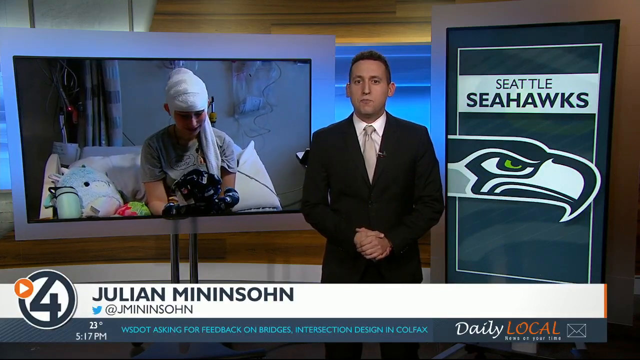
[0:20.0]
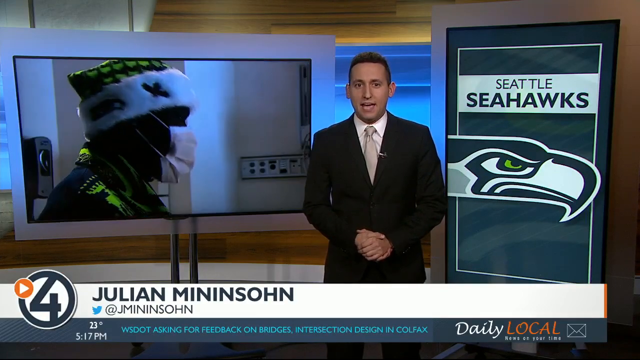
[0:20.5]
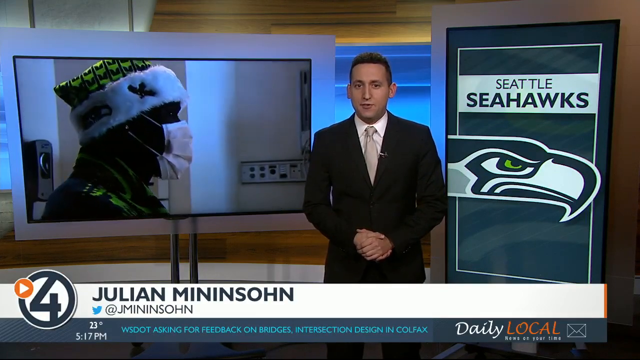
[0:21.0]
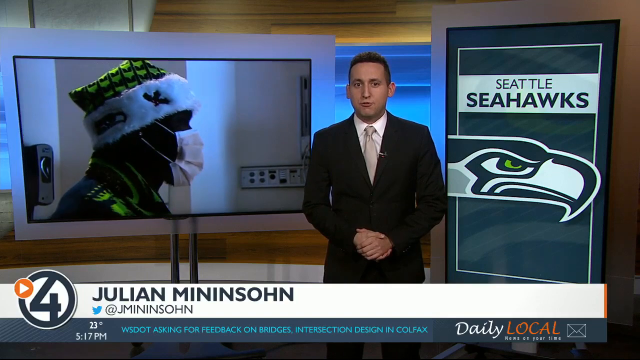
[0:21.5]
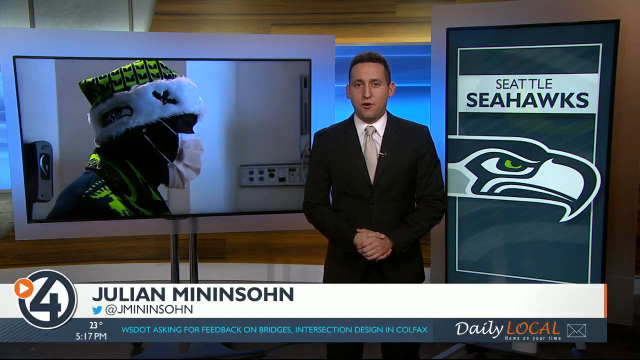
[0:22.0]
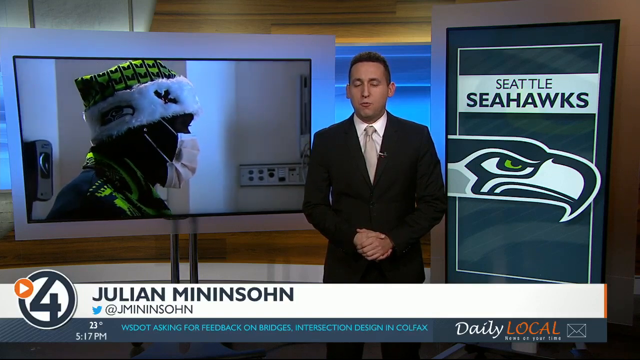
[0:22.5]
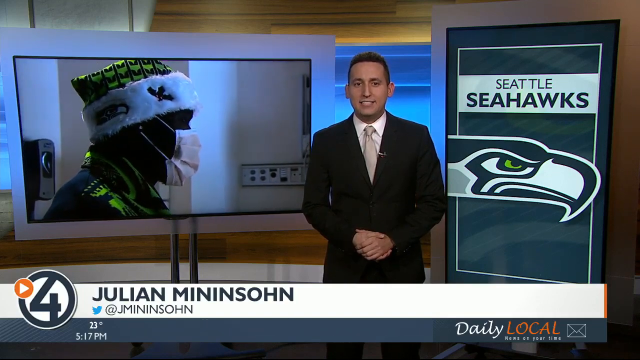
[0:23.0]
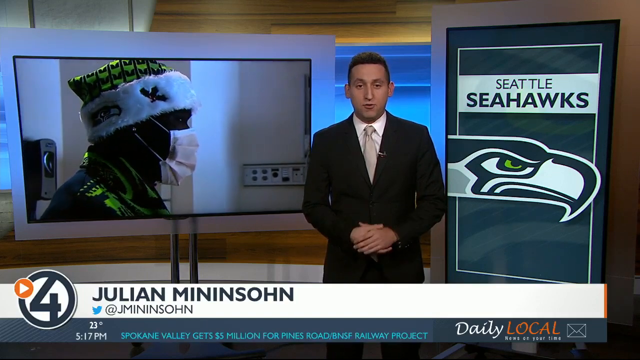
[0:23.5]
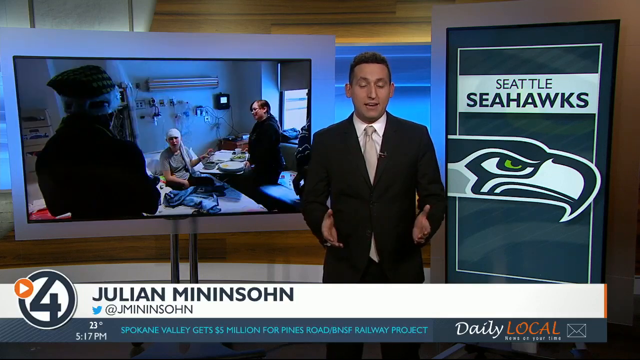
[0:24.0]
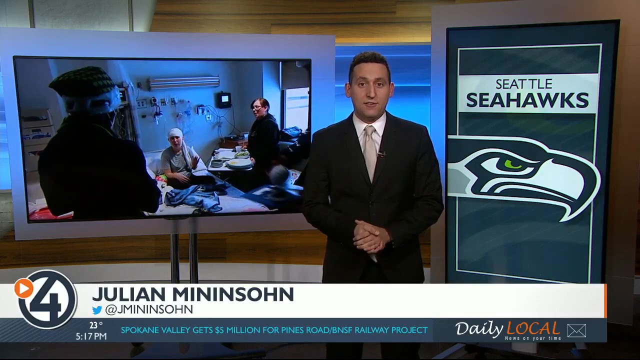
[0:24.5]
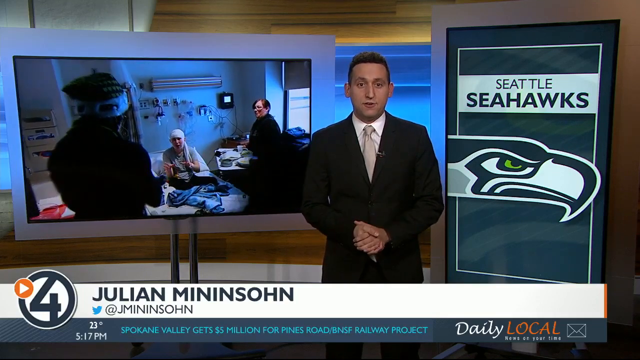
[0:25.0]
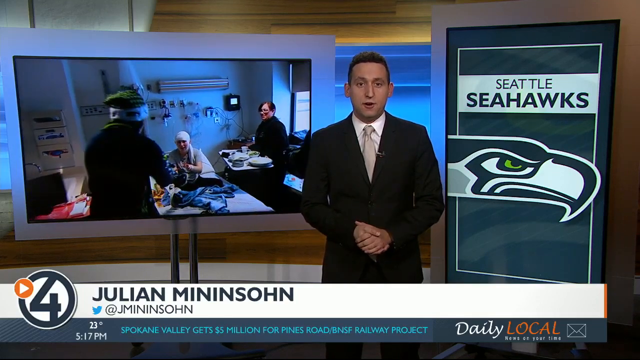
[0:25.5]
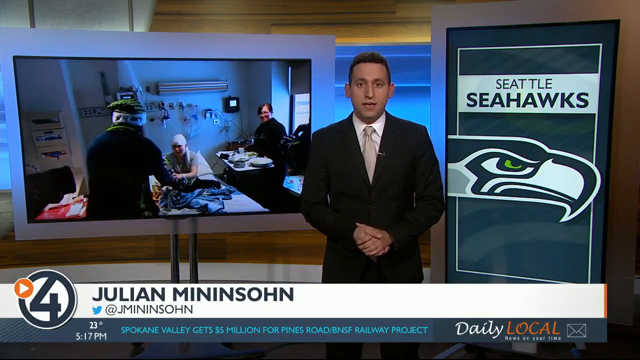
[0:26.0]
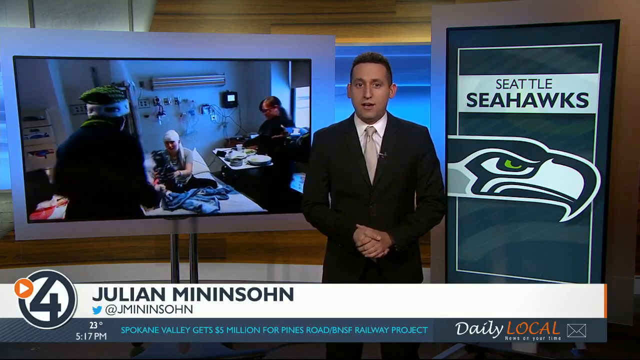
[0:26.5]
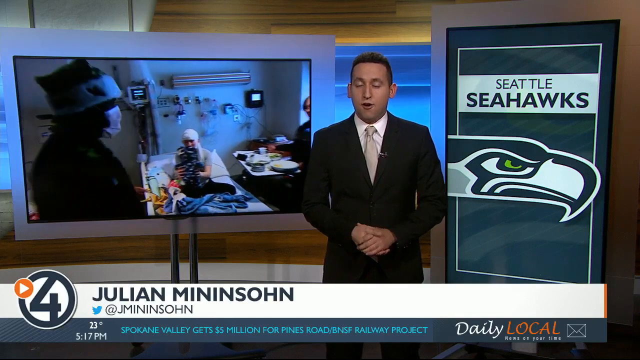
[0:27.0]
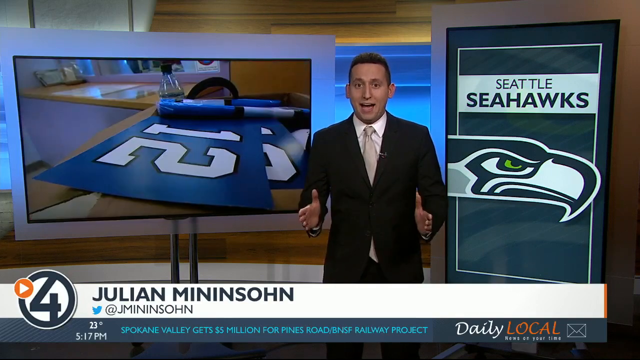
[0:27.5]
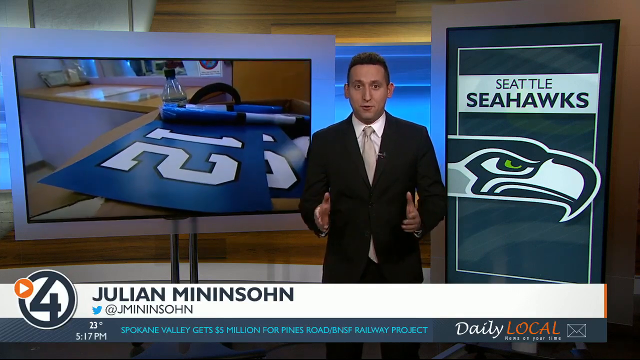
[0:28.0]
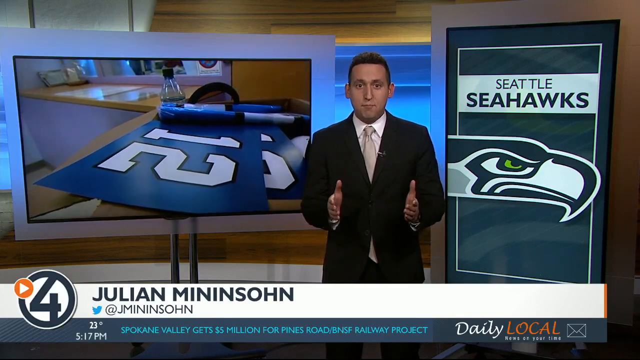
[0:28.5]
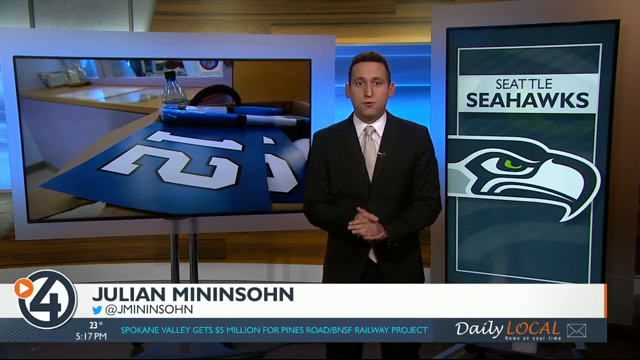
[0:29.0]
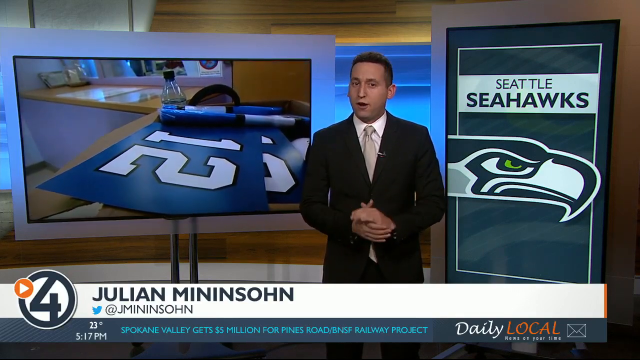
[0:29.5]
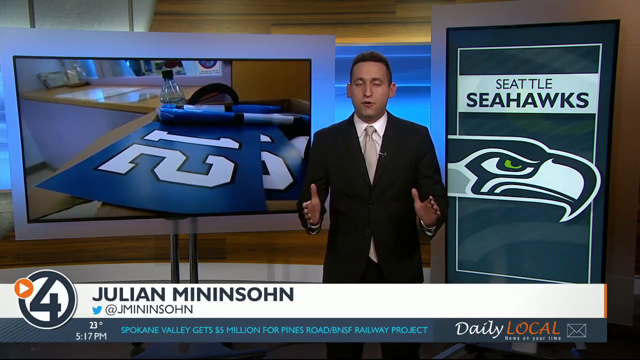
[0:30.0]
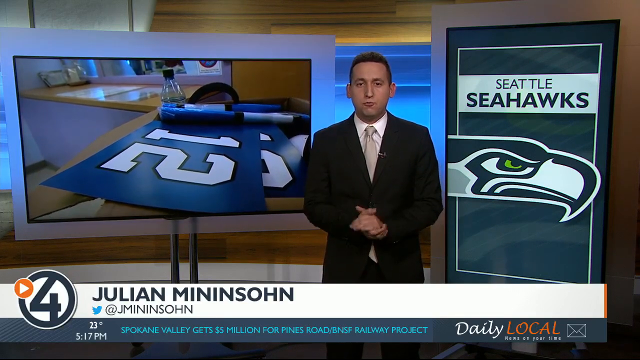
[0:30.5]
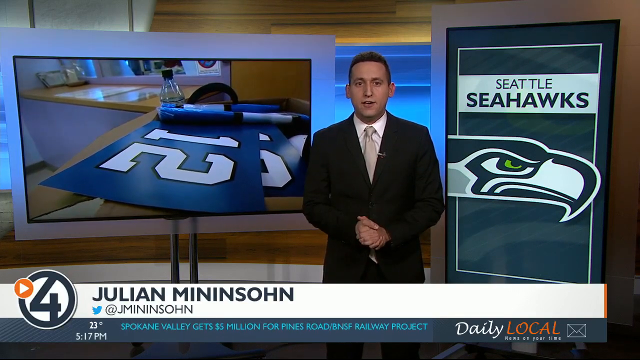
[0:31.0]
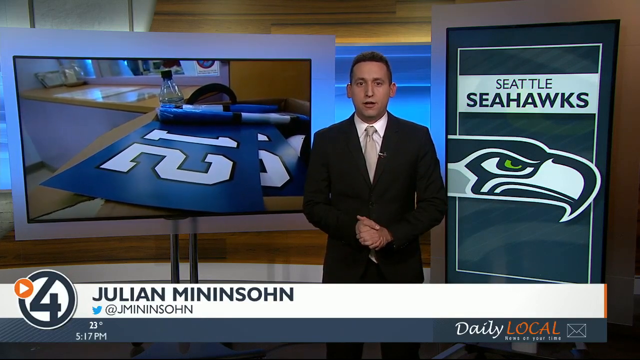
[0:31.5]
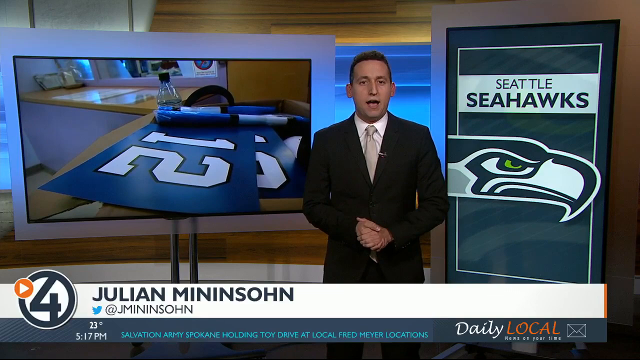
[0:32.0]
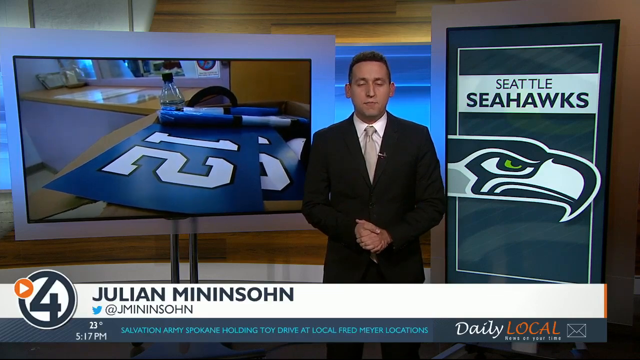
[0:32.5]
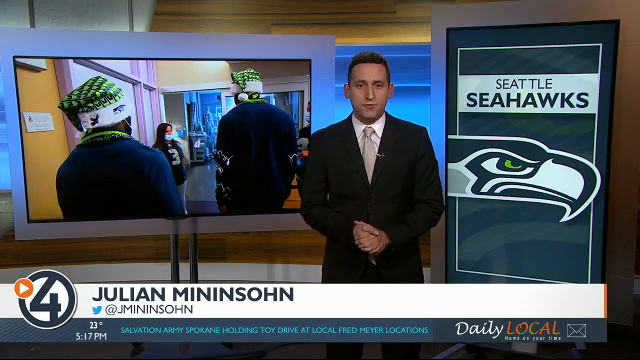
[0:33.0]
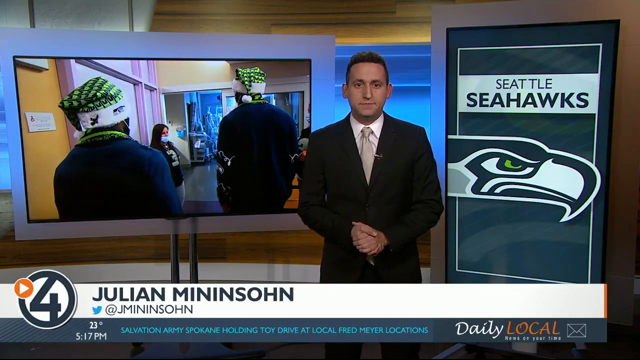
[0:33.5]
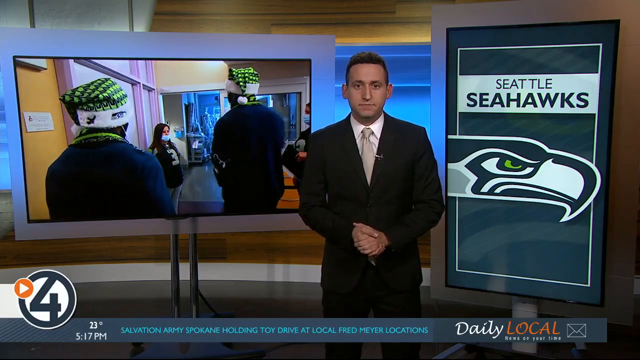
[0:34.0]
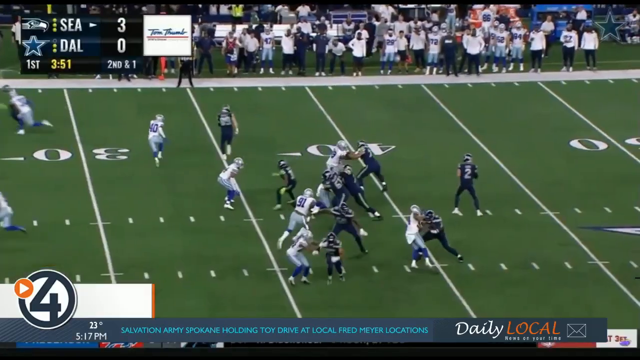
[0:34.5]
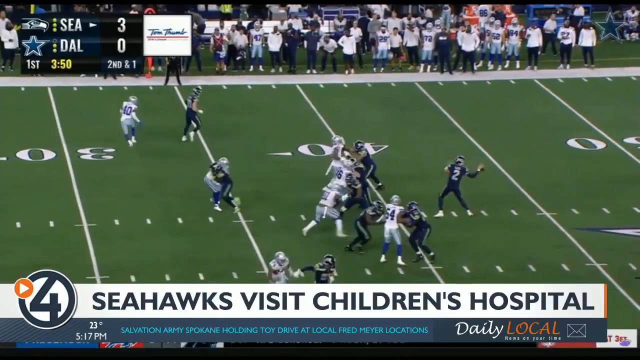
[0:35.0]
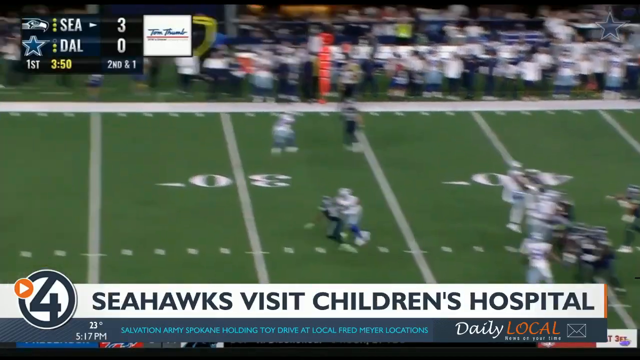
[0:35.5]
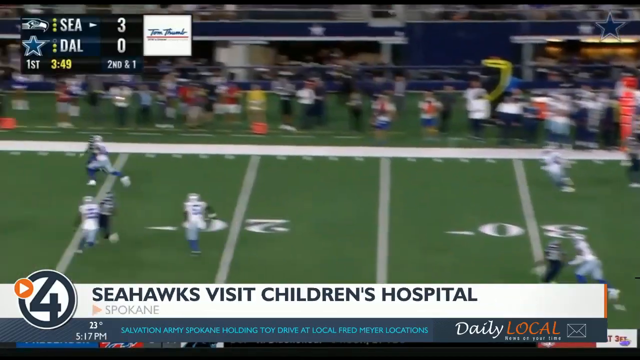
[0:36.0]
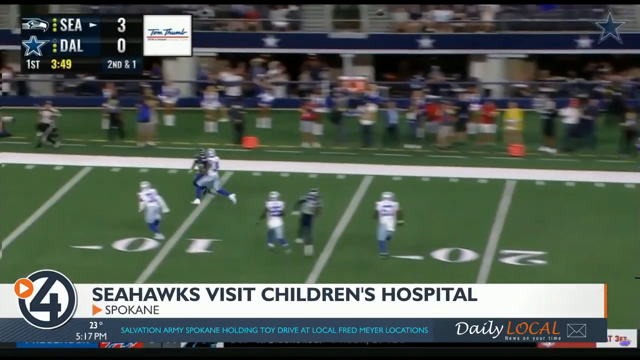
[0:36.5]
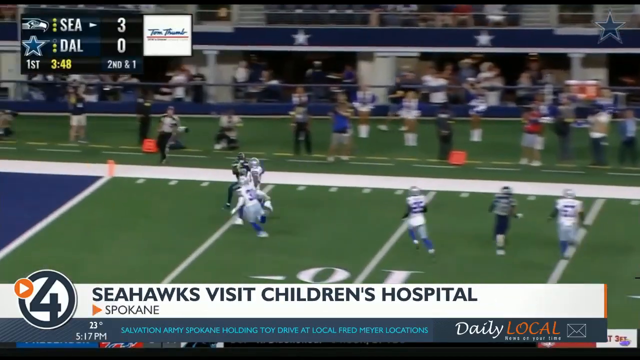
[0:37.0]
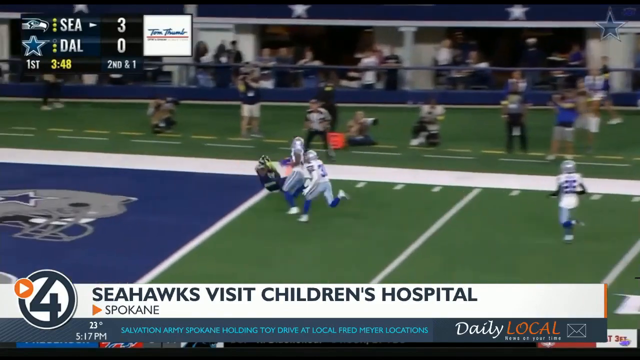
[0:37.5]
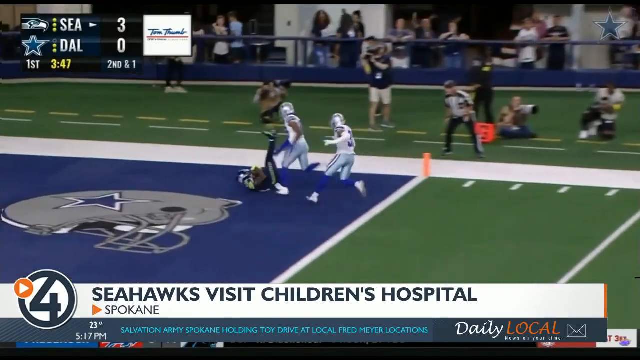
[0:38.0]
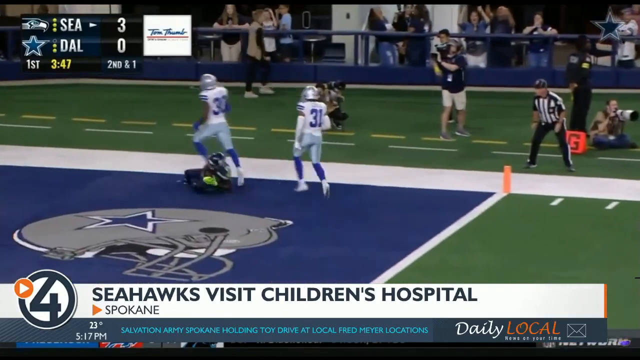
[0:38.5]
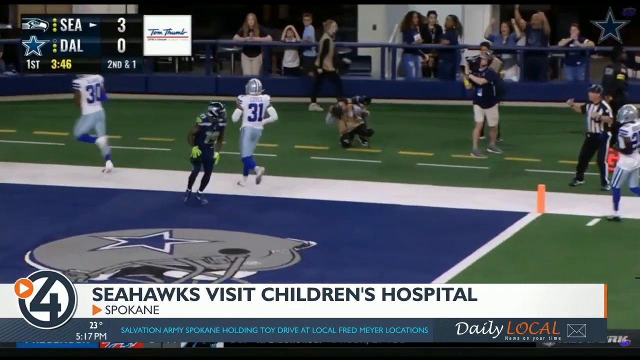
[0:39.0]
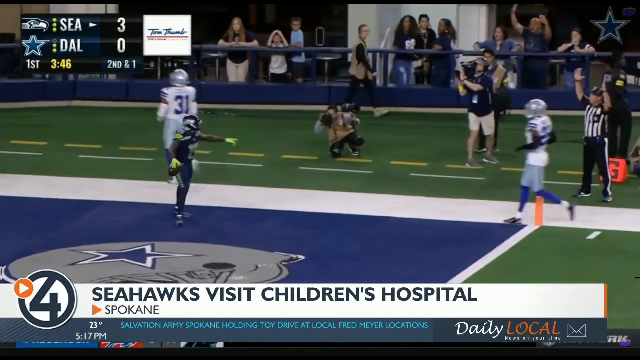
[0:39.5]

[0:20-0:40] The video continues with the sportscaster, Julian Menendsen, apparently discussing a trip to a hospital to visit a fan. The presumed Seattle Seahawks player presents a gift to a child lying in a hospital bed, with bandages around the head and hands. Another short shot shows the number 12 in Seattle Seahawks colors on a banner lying on the table around the patient's bed. The video then turns to a portion of a football game between the Dallas Cowboys and the Seattle Seahawks. The number two quarterback receives the ball at the snap and throws it approximately 50 yards into the end zone to the receiver, who is presumably number 12, the player giving the gift to the hospital patient. A caption reads "Seahawks visit Children's Hospital" and identifies the location as Spokane, Washington.